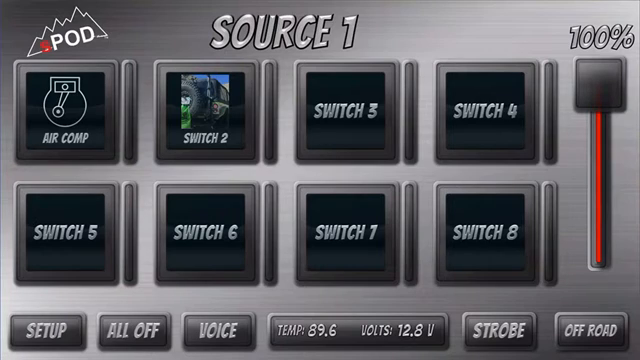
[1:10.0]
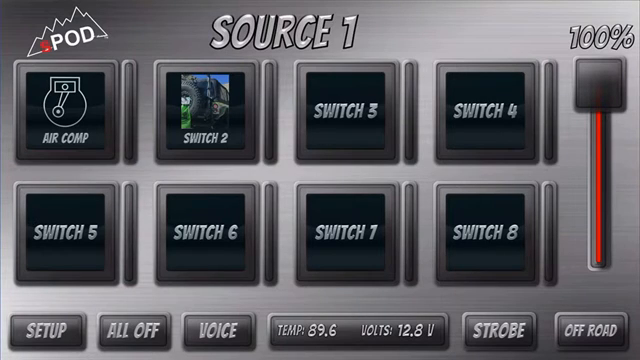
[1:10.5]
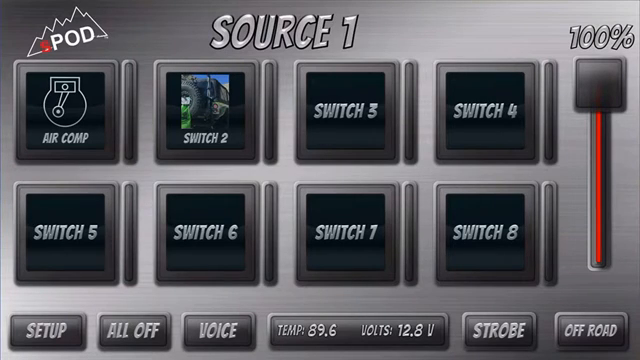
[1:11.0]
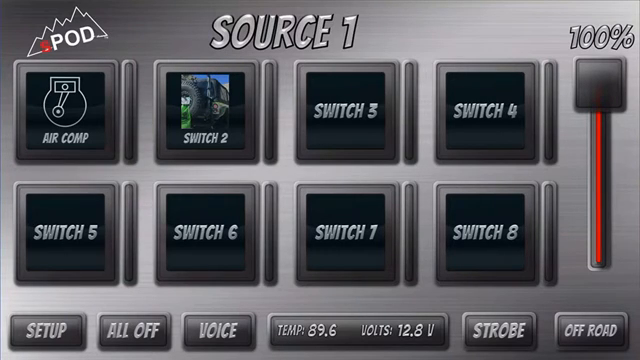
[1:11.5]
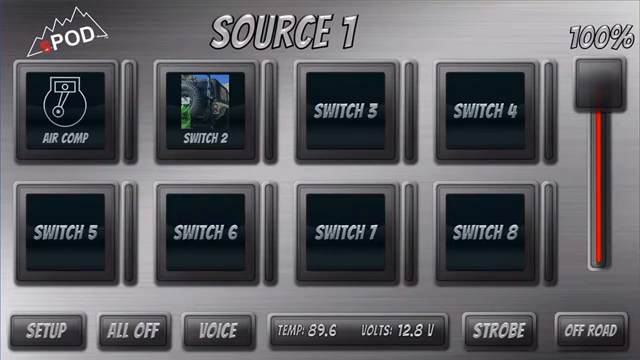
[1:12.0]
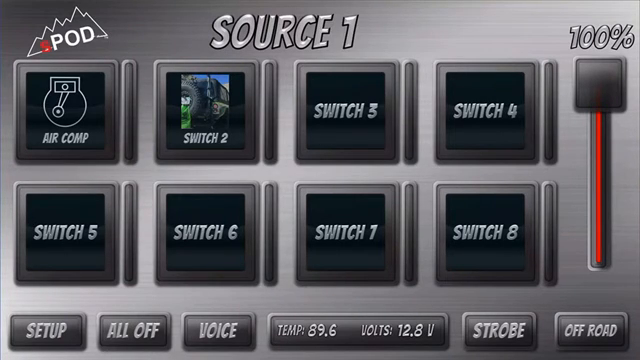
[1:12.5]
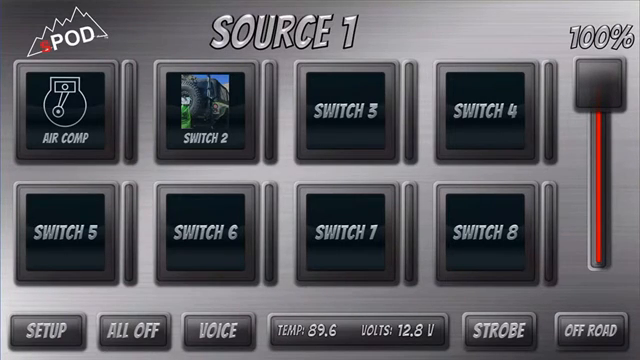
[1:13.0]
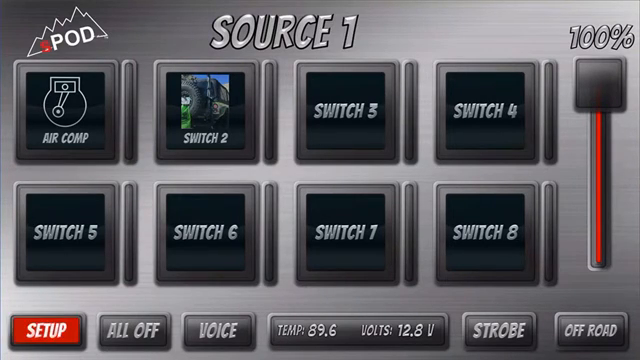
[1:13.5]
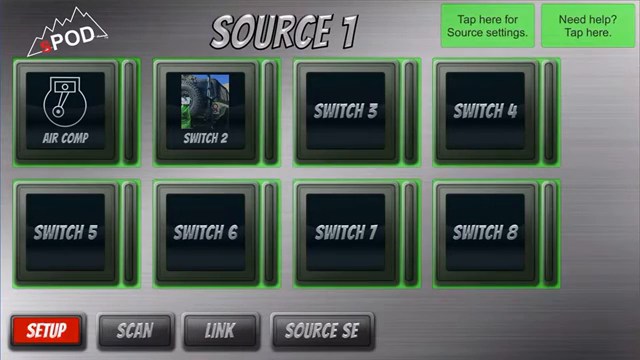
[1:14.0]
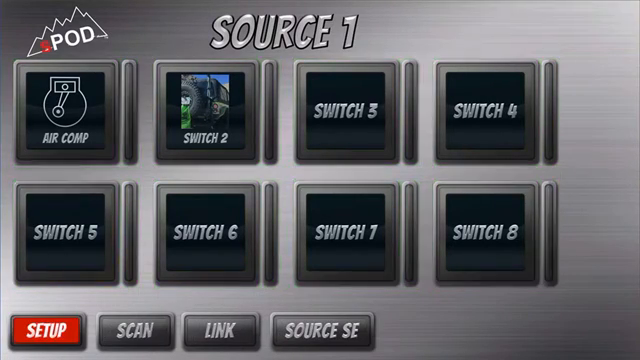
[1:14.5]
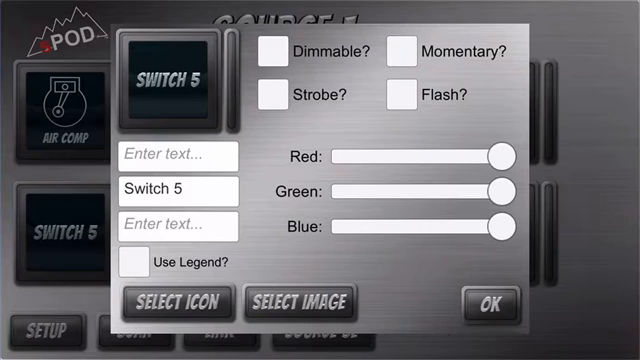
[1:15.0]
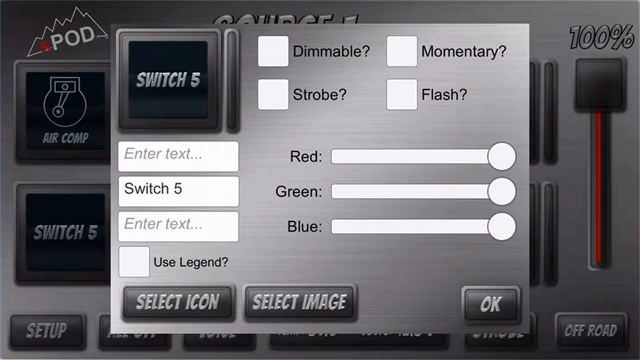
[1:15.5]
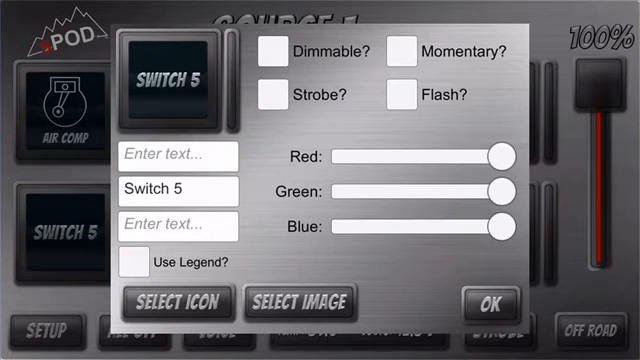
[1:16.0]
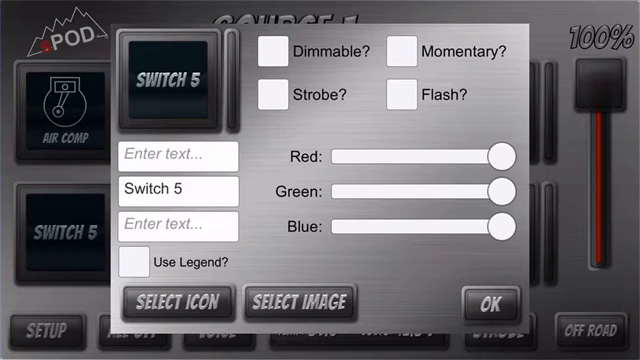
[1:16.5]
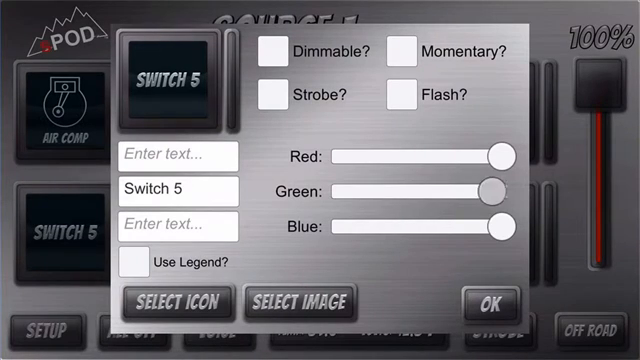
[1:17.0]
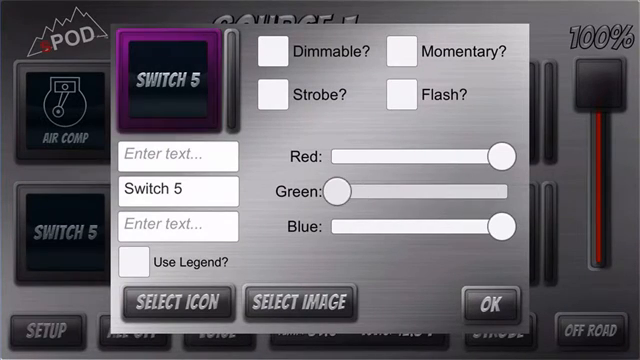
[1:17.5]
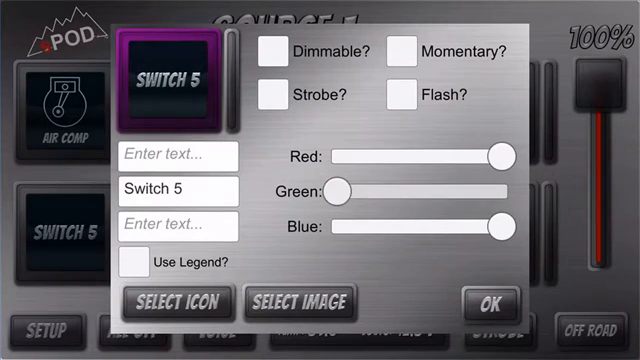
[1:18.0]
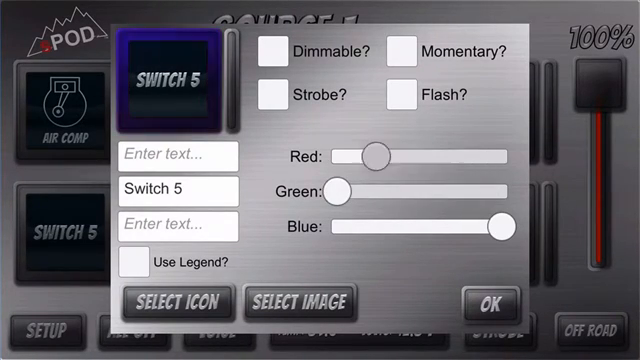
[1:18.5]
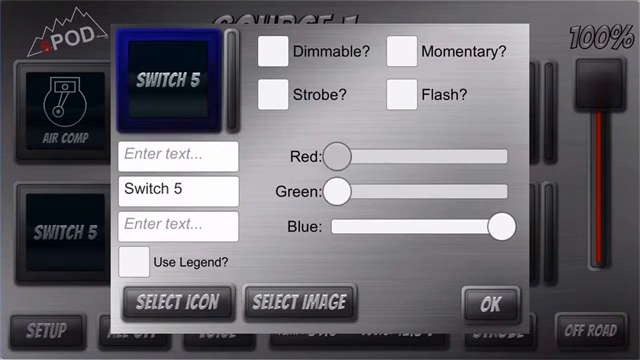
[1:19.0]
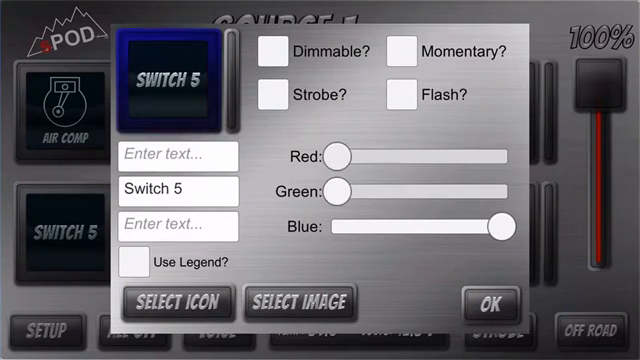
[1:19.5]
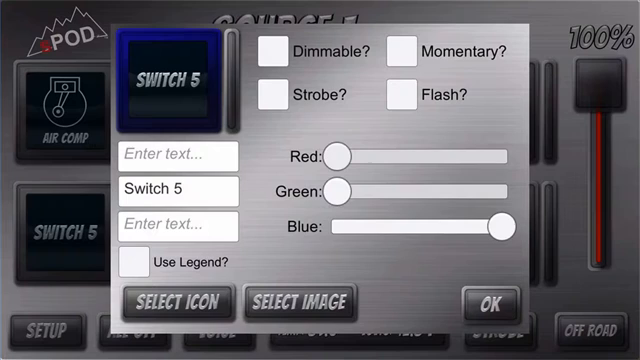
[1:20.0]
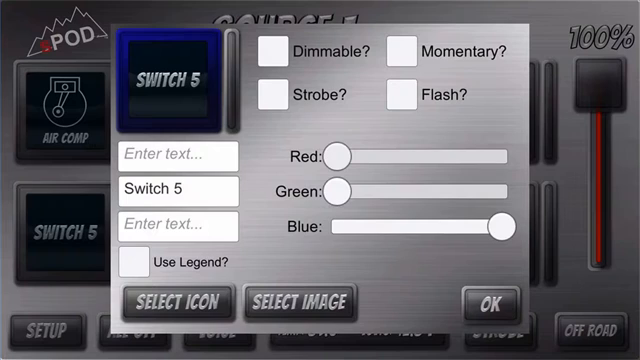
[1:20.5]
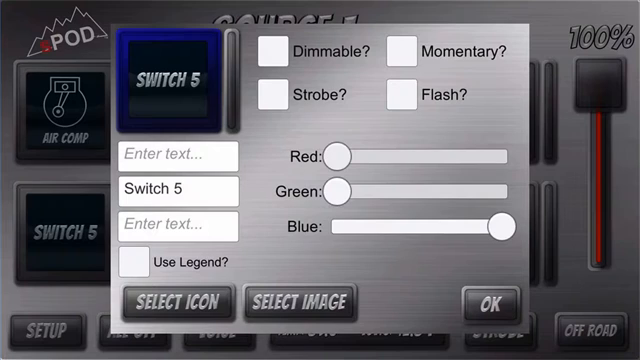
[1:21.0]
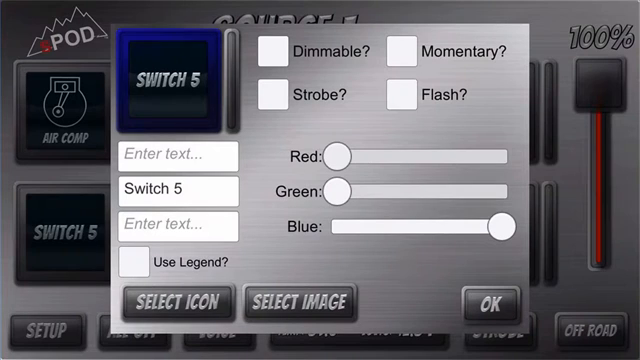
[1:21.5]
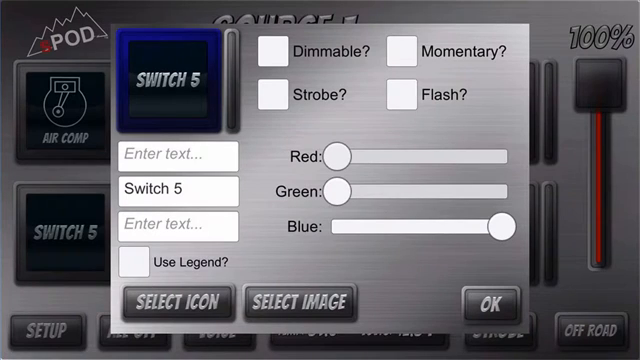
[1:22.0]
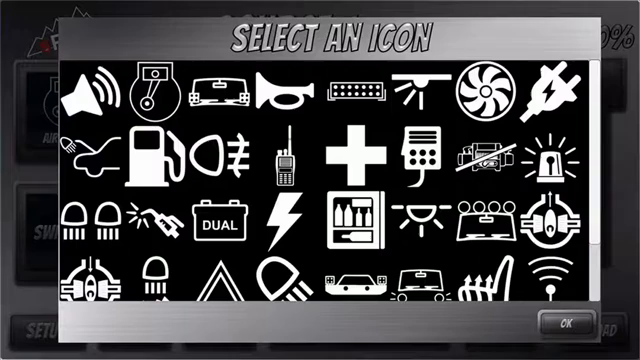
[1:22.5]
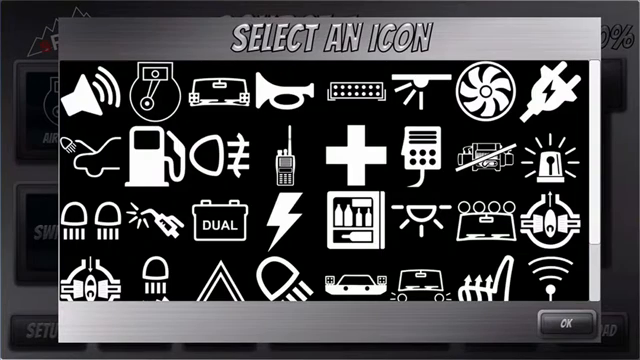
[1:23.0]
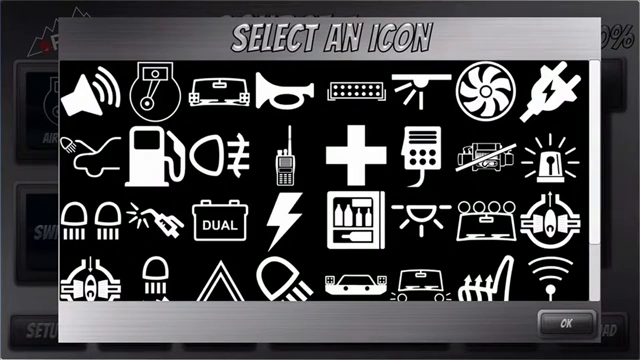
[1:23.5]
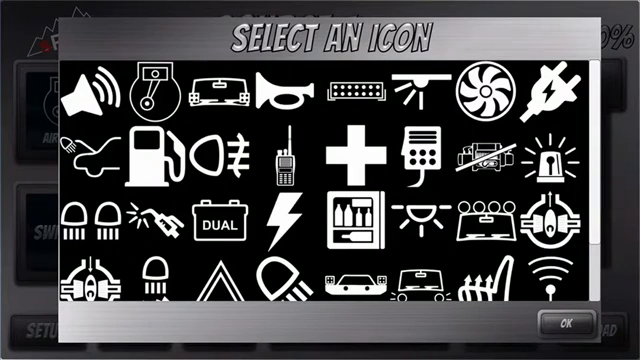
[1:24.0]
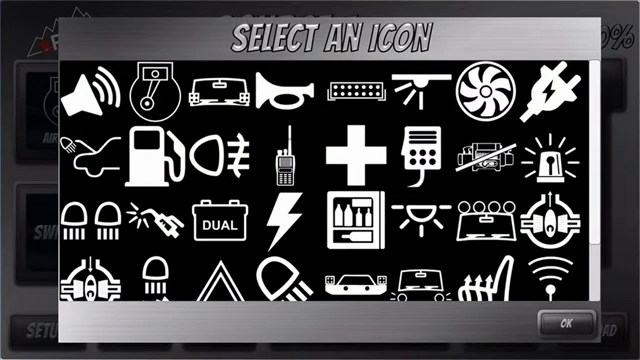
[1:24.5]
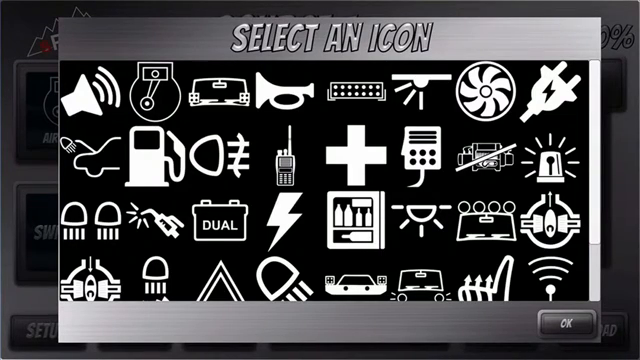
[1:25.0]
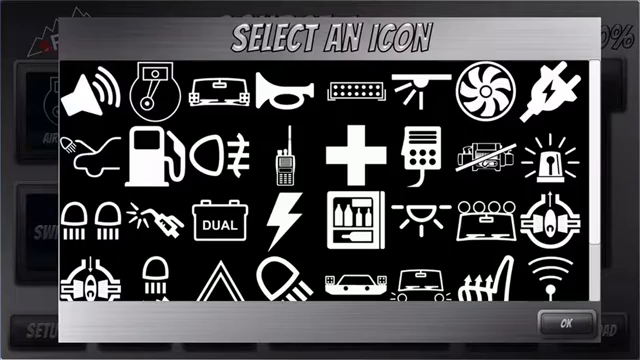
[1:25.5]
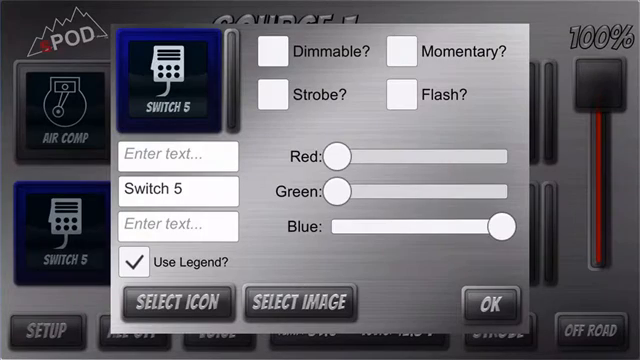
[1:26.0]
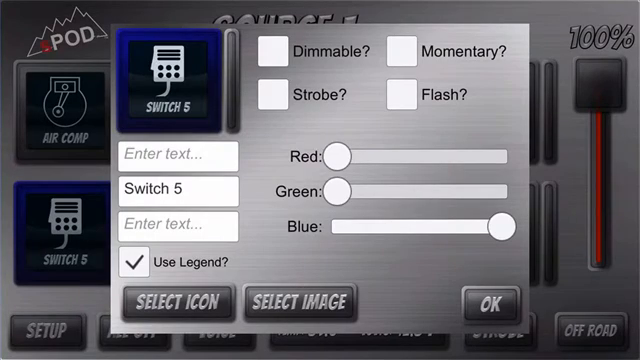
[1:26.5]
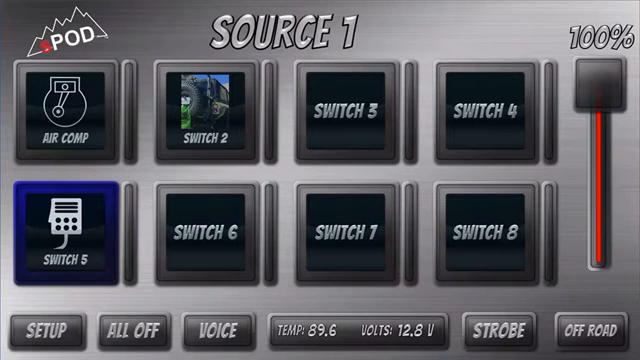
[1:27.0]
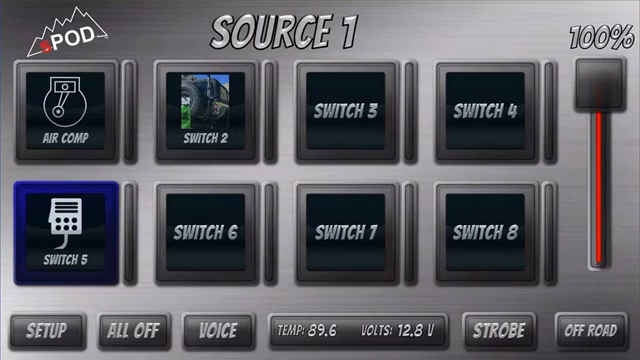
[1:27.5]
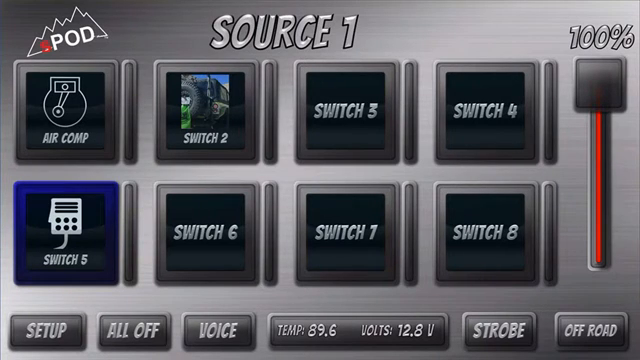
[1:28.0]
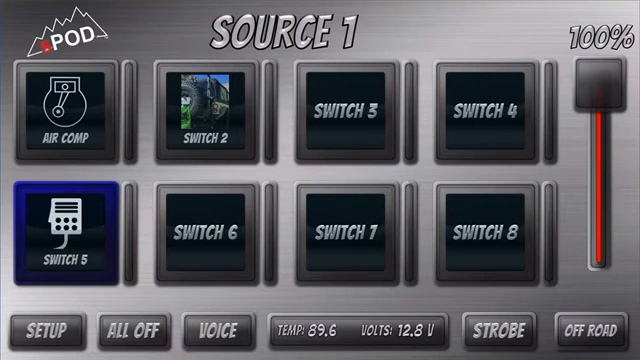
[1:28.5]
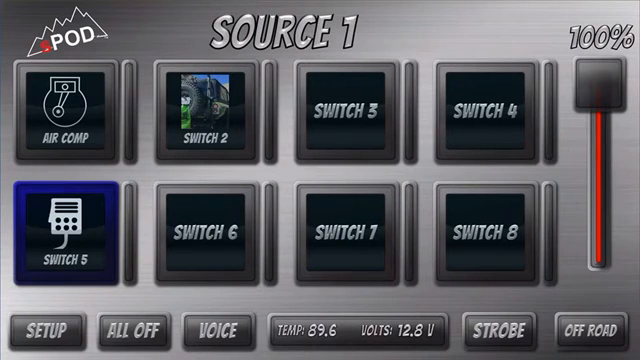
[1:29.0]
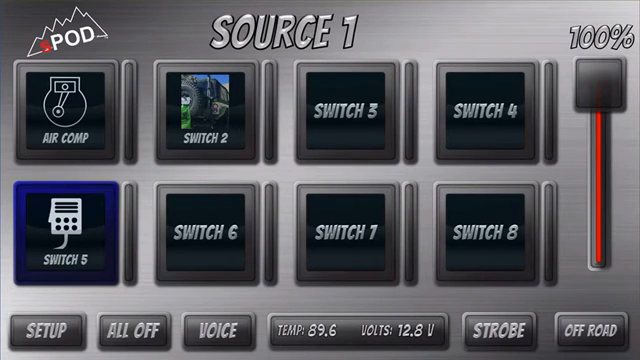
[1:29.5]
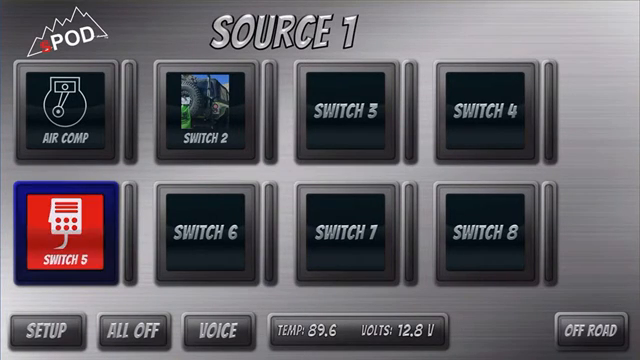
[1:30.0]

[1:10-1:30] The user goes to switch 5 and moves the red and green sliders down to keep only blue, then changes the icon to some sort of control-panel-like image. He clicks out of it, and for a second switch 5 turns red before he deselects it and is done with the interface. AirComp and switch 2 are in a different row from switch 5. In the display menu, the background changes from a black metallic background to a dark blue one, and a border appears around Switch 5, allowing it to be color coded along with many other options.